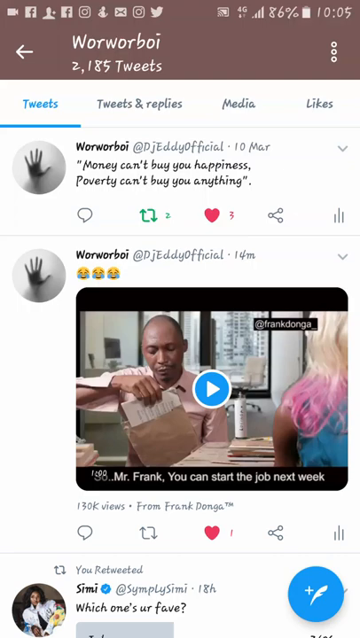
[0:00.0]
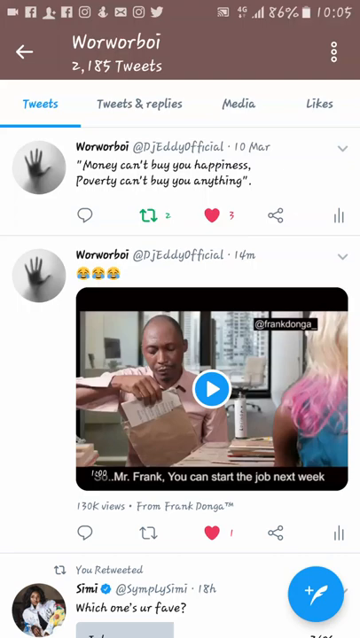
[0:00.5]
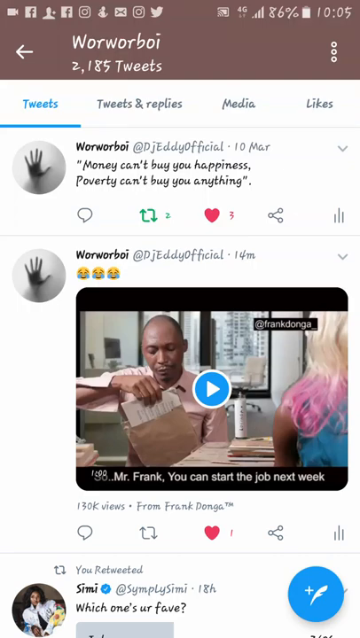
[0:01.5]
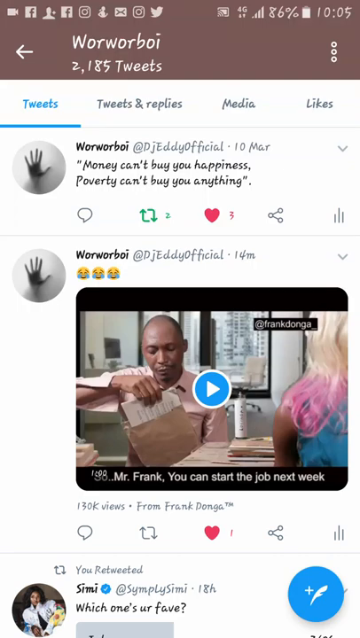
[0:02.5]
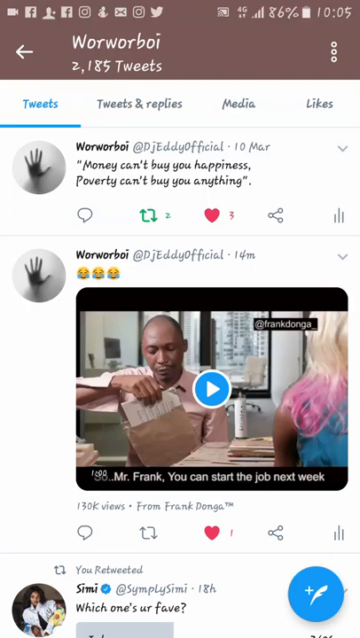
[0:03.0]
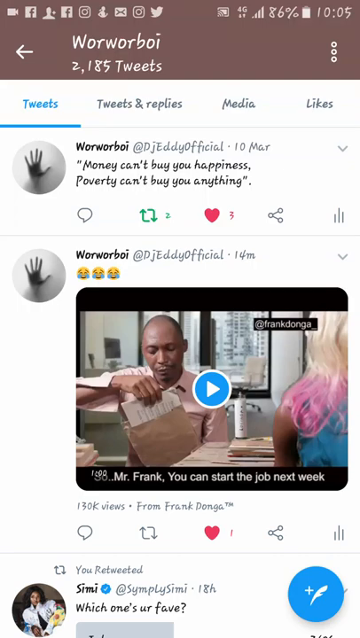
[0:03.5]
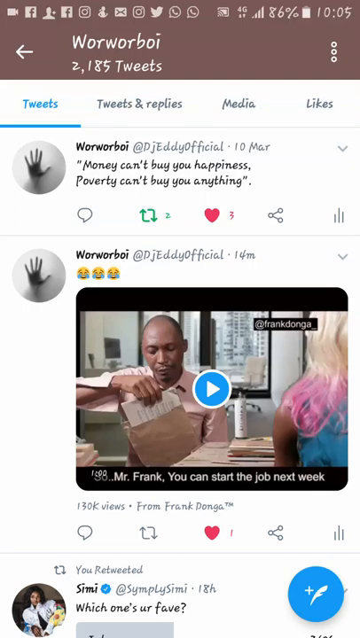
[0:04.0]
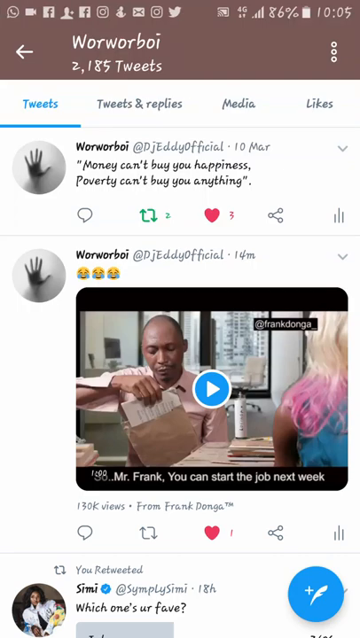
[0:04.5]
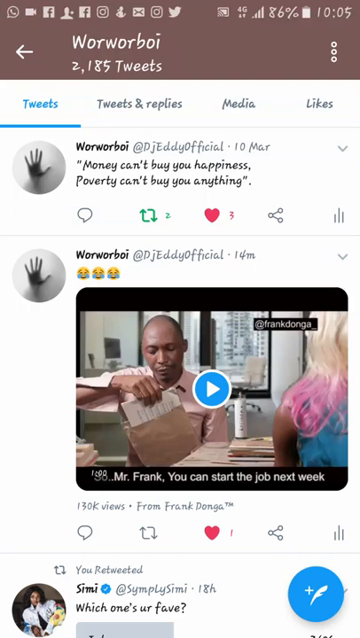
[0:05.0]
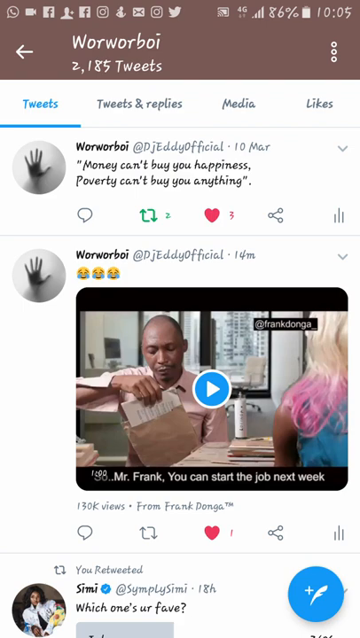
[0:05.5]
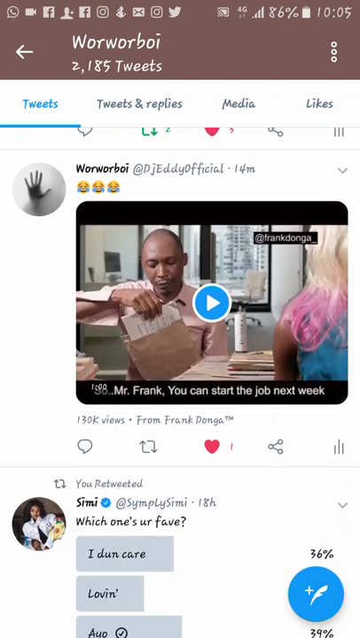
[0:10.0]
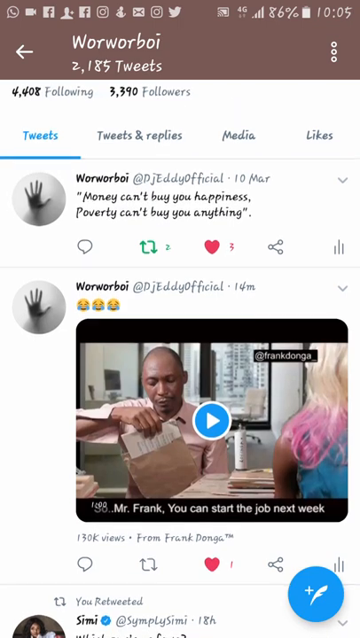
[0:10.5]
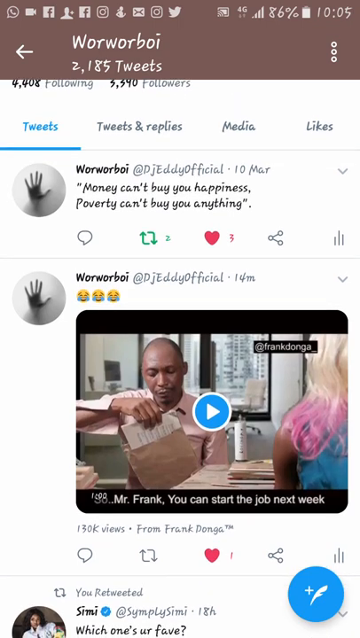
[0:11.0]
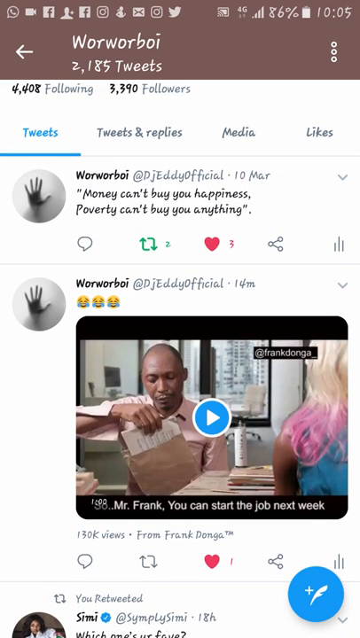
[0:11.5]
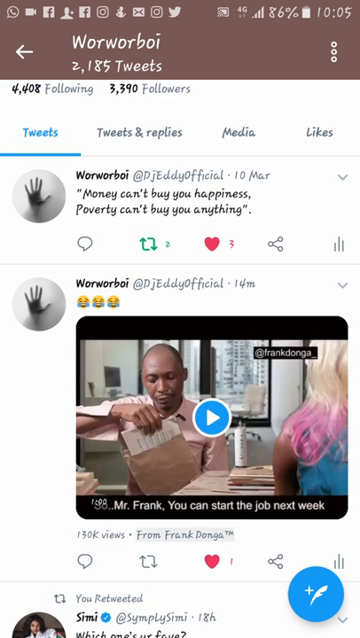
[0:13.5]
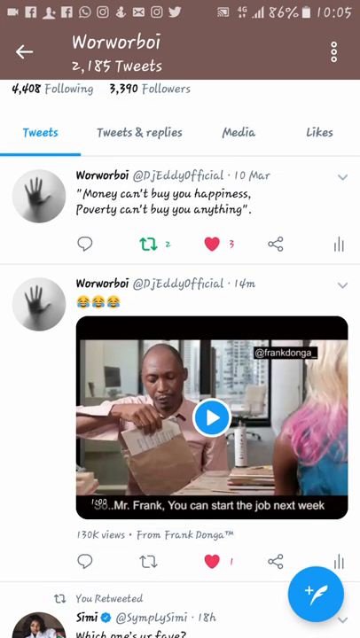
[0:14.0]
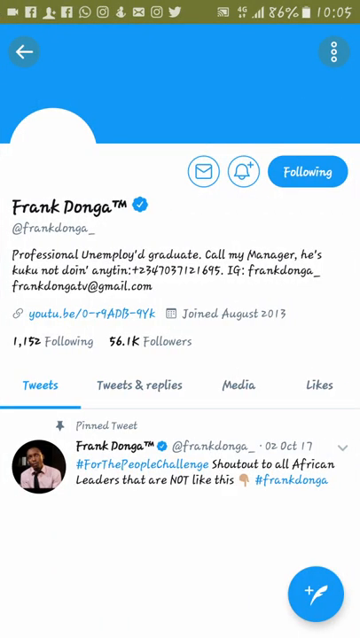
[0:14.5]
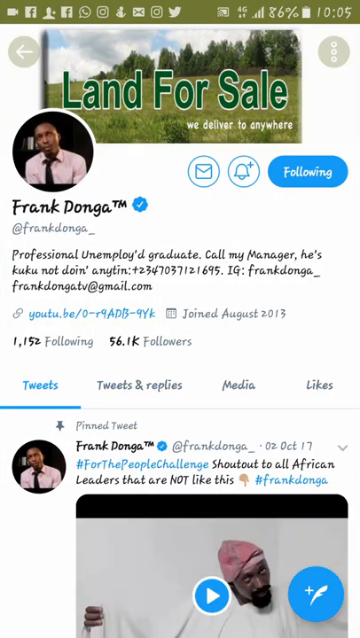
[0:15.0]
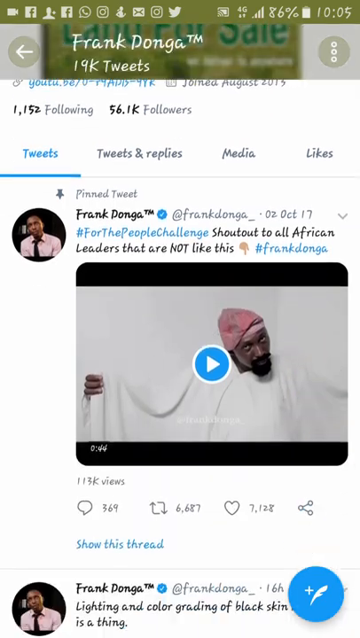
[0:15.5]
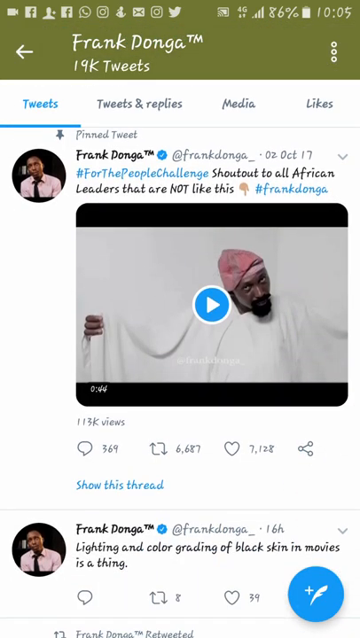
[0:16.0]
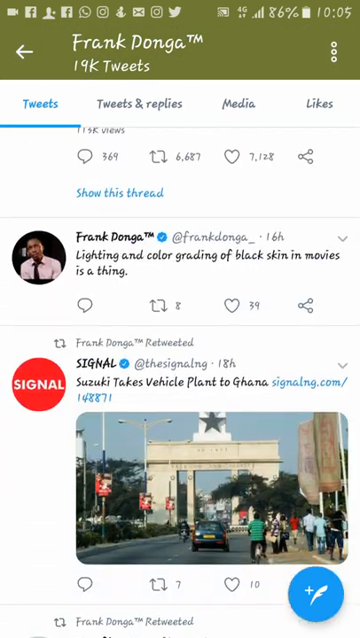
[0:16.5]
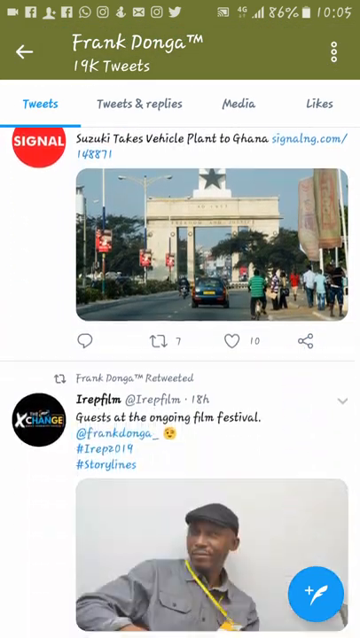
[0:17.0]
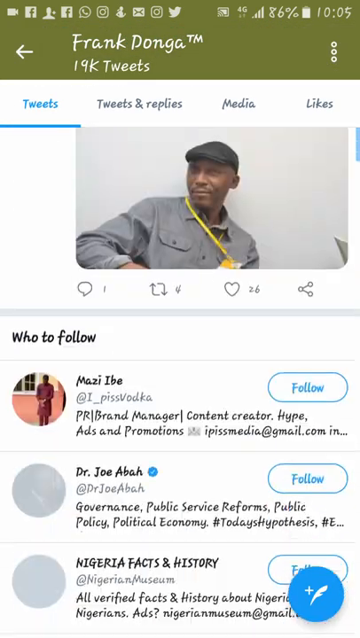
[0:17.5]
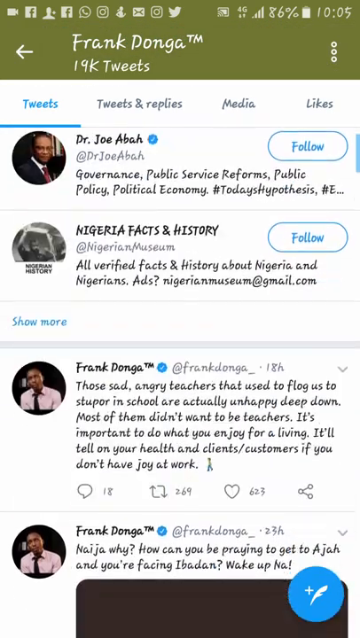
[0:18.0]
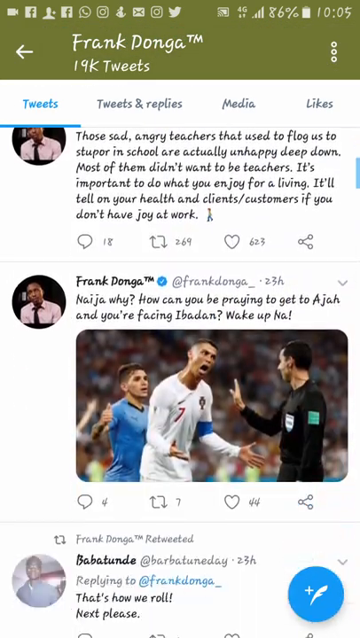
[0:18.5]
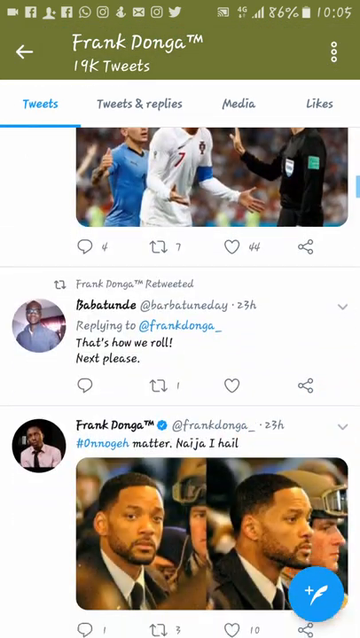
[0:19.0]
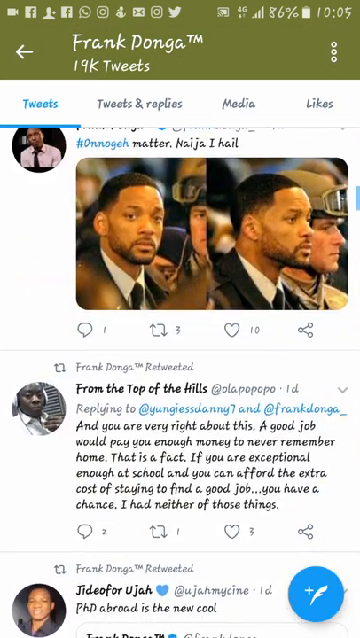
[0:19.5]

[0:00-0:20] The video opens on the Twitter page of Worworboi, which has 2,185 tweets, some posted by the account owner and some retweeted. The first tweet is directed to DJ Eddy Official, was made on 10 March, and reads, "Money can't buy you happiness, poverty can't buy you anything." The next tweet shows a video titled "Mr. Frank you can start the job next week." Below it is a retweeted video originally tweeted by Simi, which reads, "which one is your fave?" Someone then scrolls the page up and down. The screen shifts to the Twitter page of Frank Donga, which has 19k tweets and shows a large number of views, messages and likes on each post. The page is scrolled down.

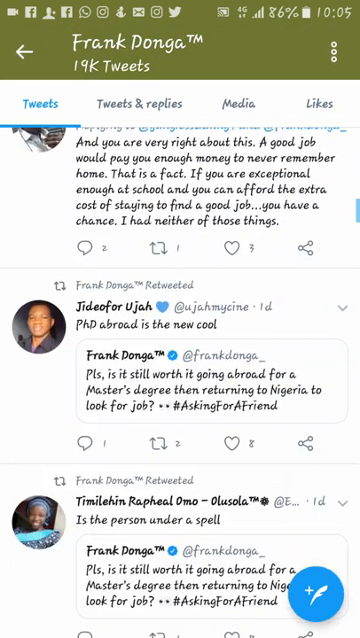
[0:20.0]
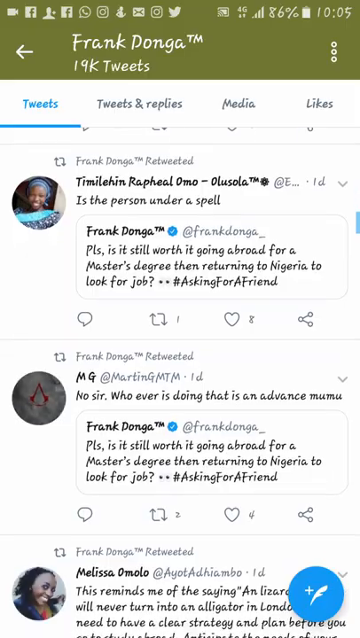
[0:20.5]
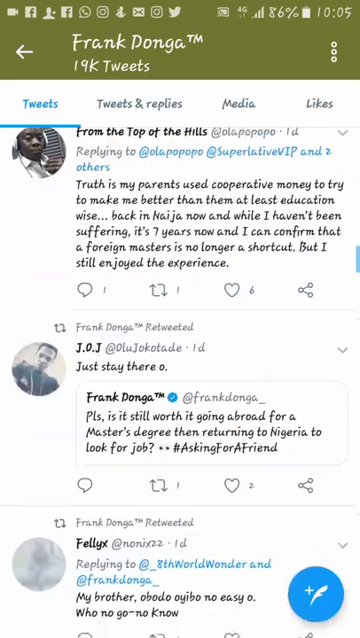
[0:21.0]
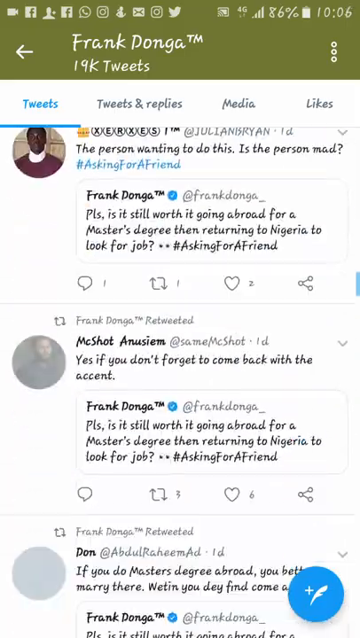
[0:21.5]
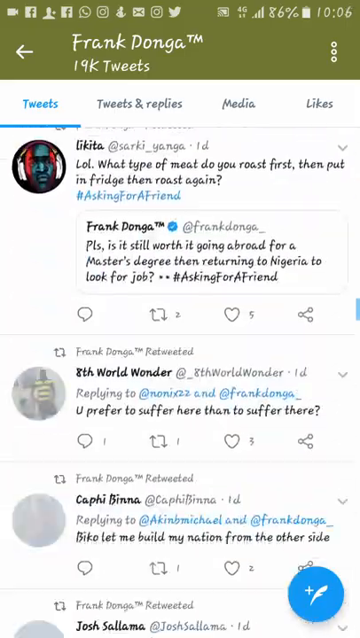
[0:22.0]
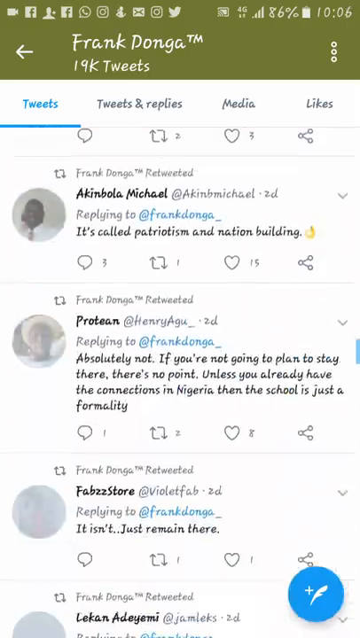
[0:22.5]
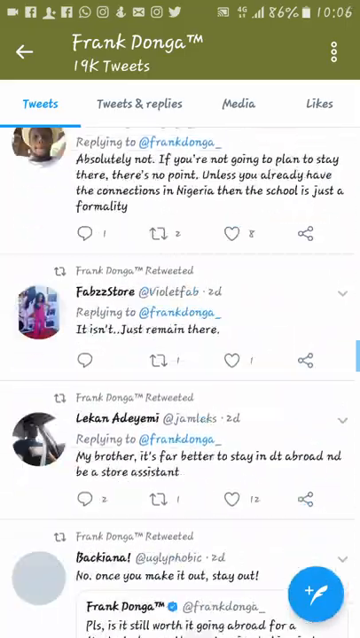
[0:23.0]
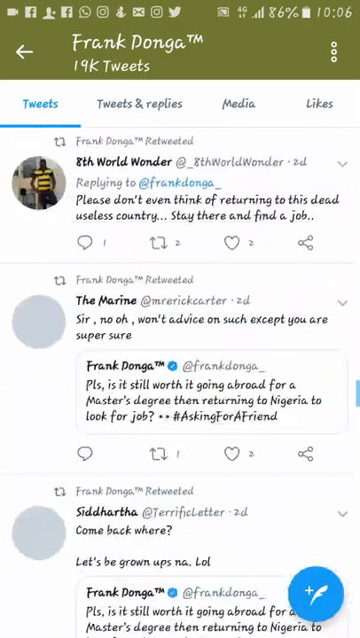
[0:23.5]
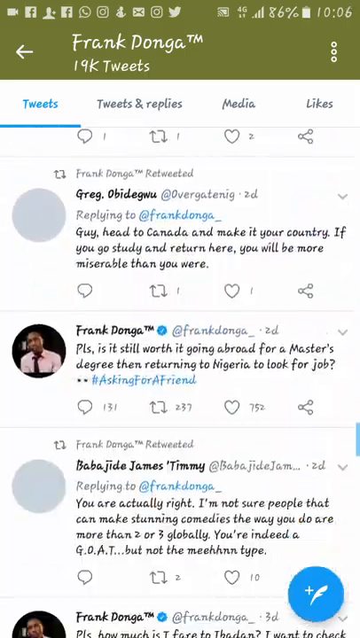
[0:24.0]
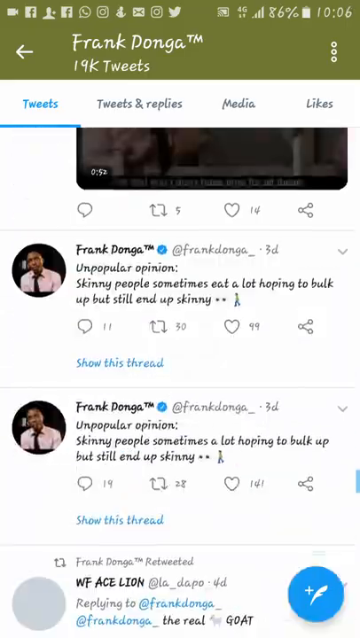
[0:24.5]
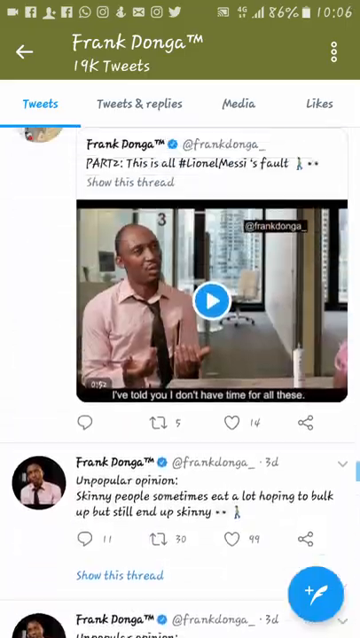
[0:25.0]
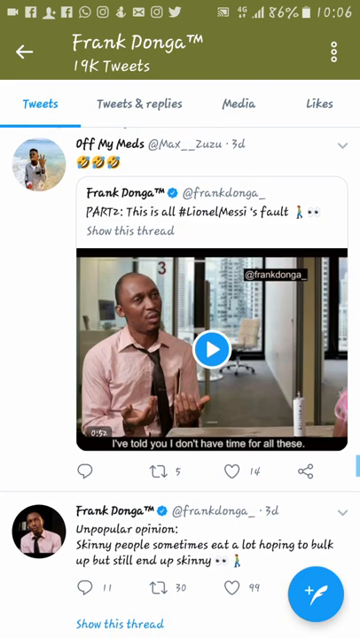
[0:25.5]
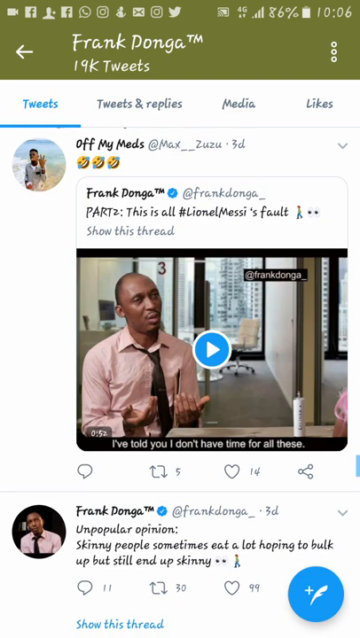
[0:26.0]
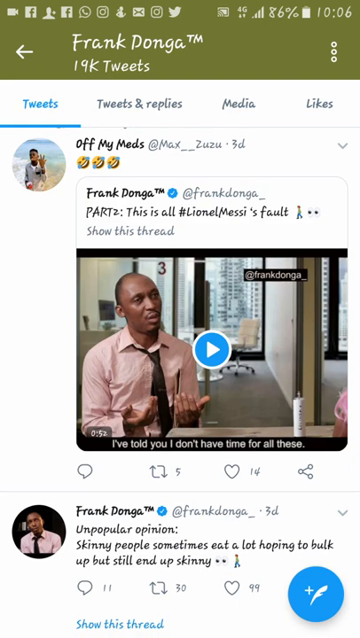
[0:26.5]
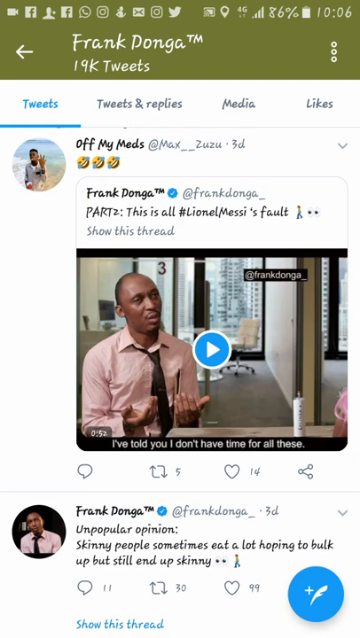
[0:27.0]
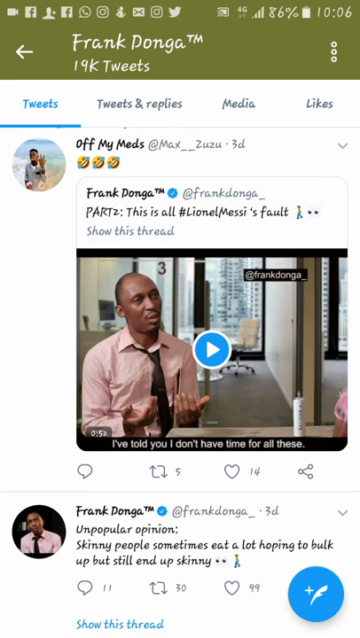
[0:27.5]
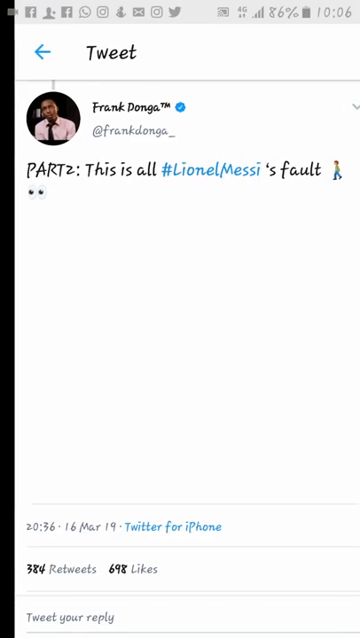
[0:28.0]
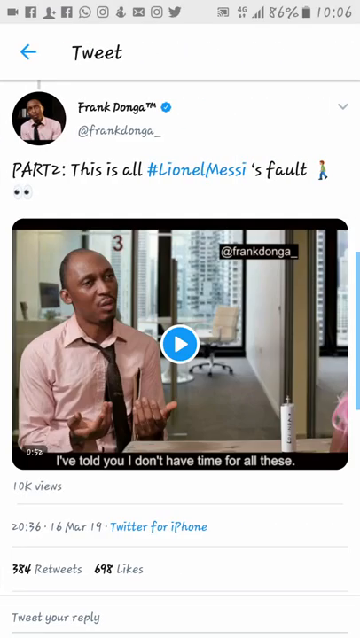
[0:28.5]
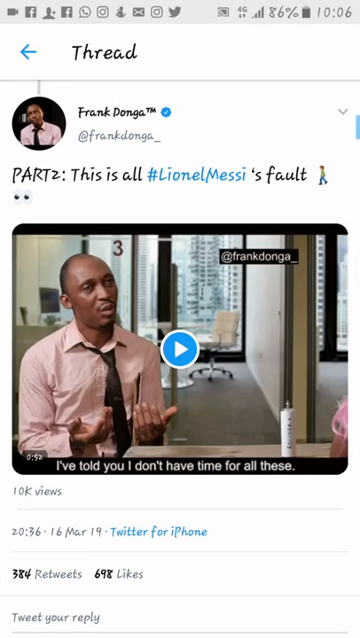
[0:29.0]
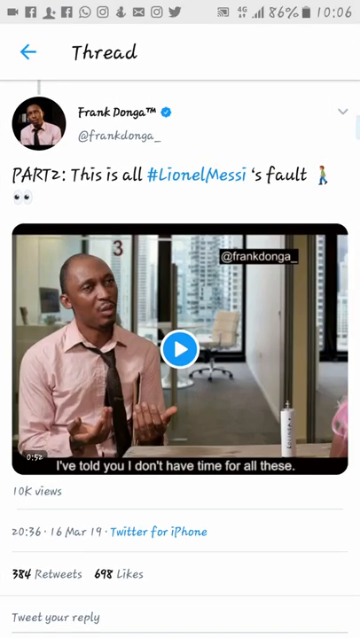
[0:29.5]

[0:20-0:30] A page by Frank Lunga is scrolled down. The scrolling stops at a video showing a man in a pink t-shirt and a black tie, with the text "I've told you I don't have time for all this" at the bottom of the picture and another line at the bottom reading "This is all #Lionel Messi's fault".